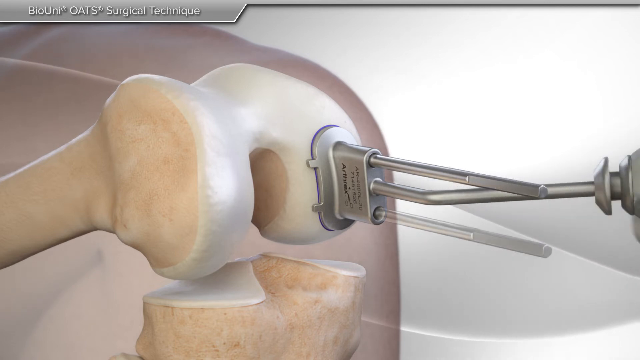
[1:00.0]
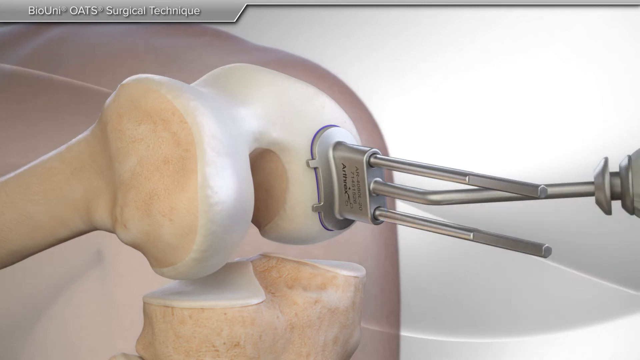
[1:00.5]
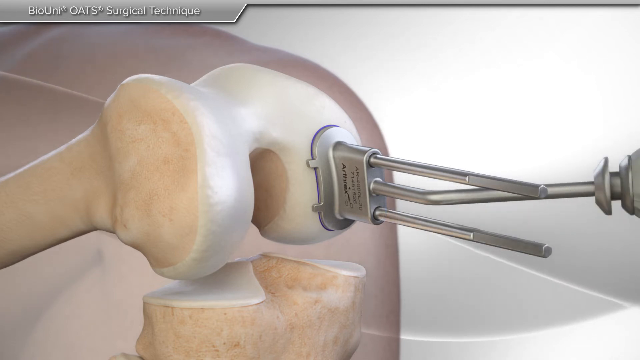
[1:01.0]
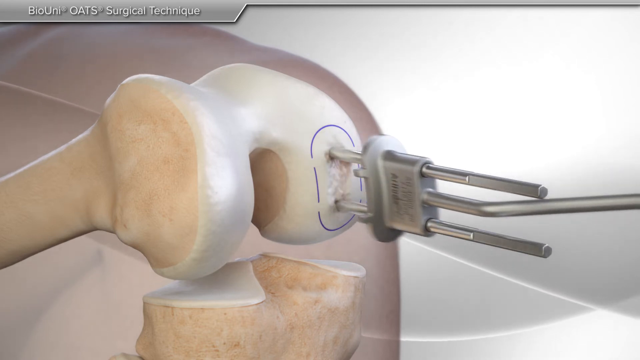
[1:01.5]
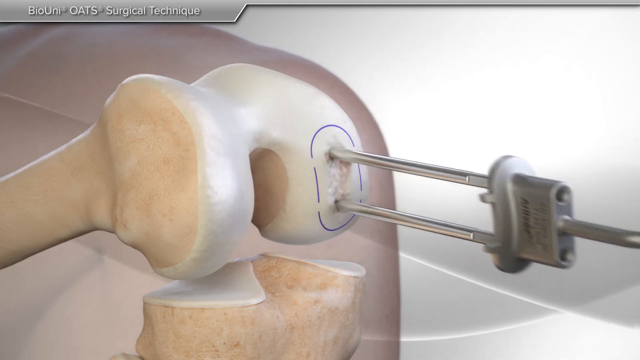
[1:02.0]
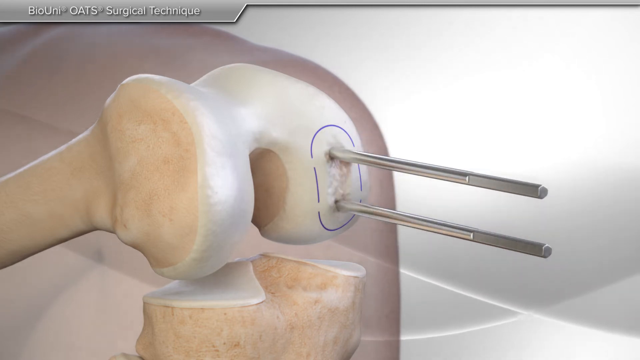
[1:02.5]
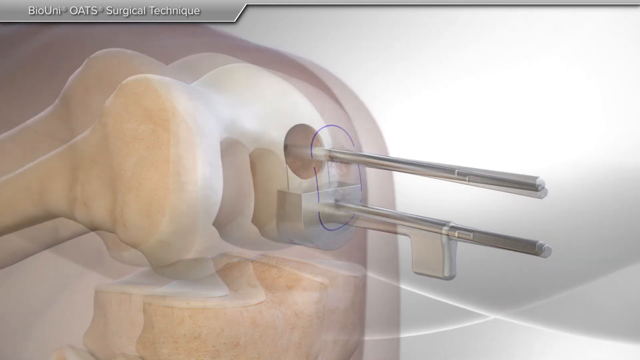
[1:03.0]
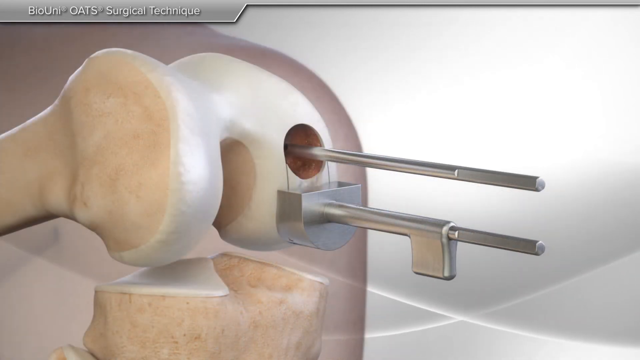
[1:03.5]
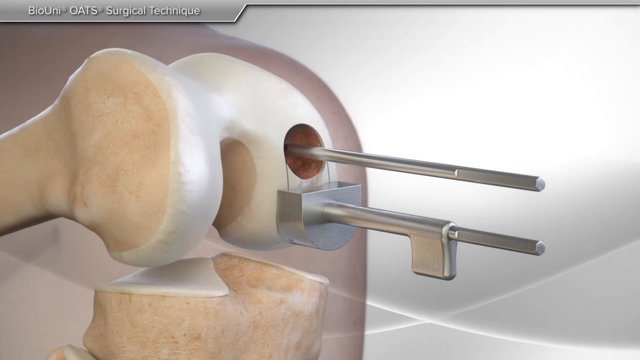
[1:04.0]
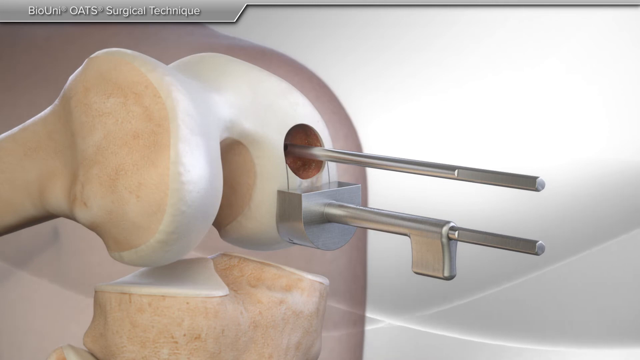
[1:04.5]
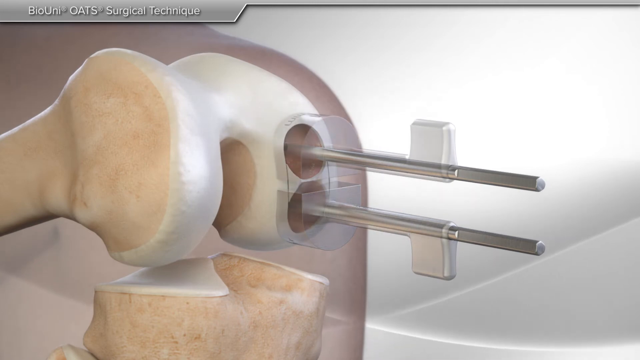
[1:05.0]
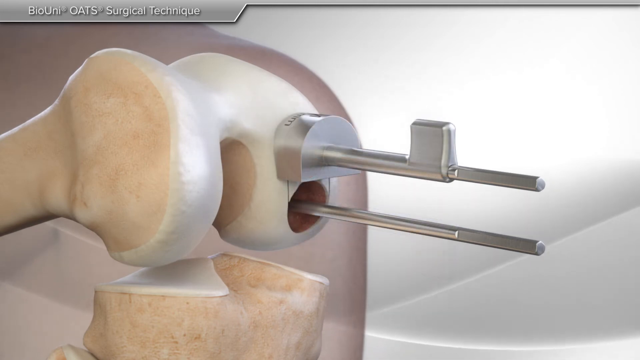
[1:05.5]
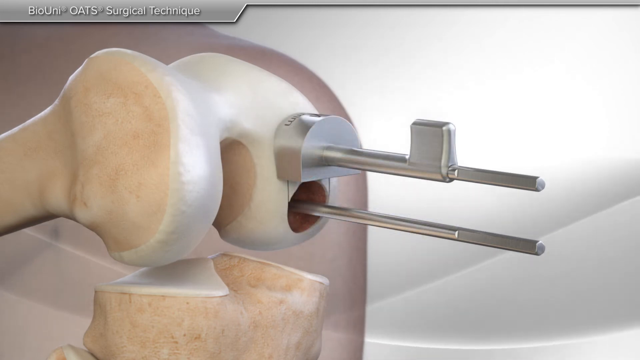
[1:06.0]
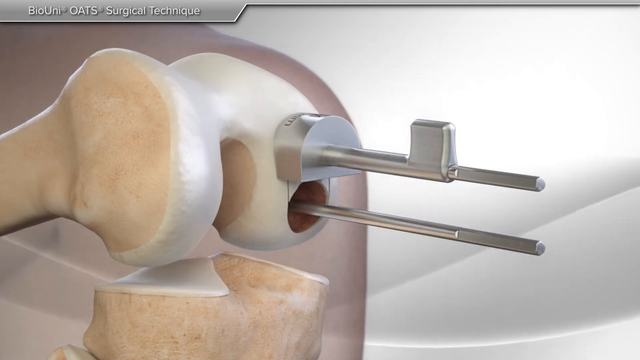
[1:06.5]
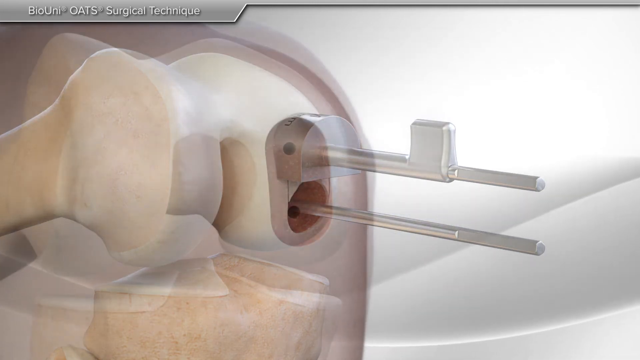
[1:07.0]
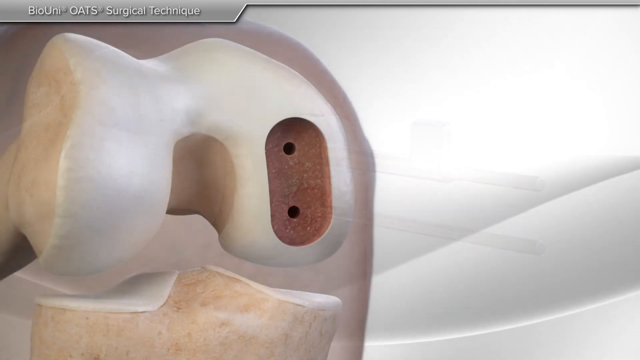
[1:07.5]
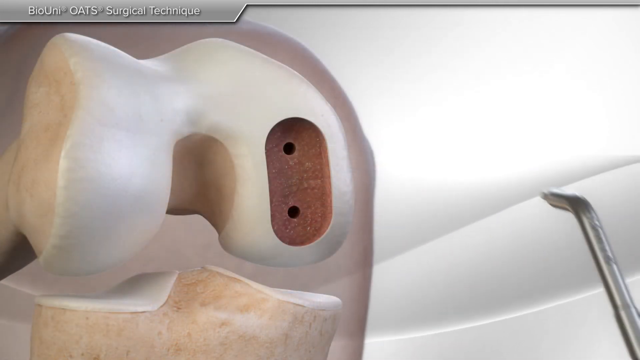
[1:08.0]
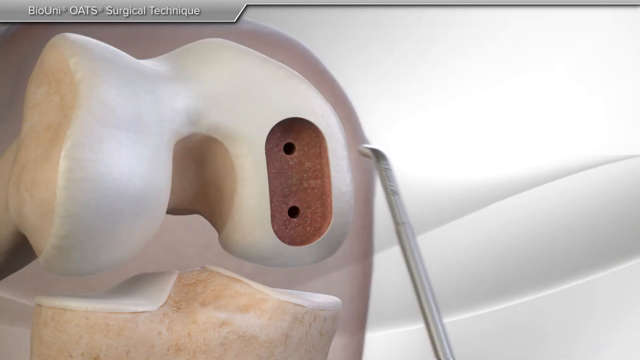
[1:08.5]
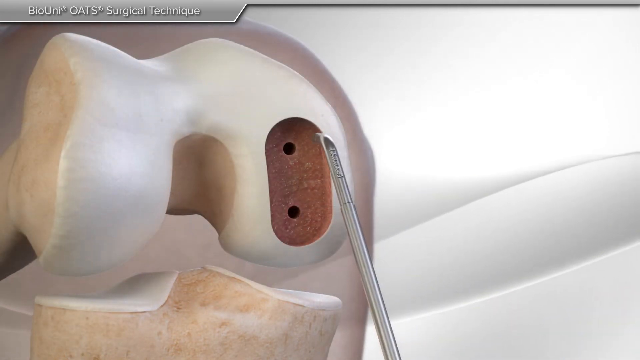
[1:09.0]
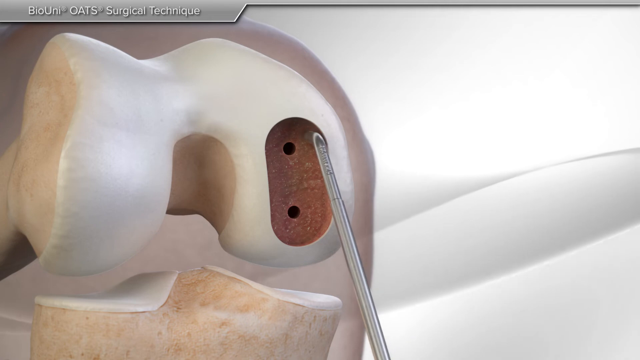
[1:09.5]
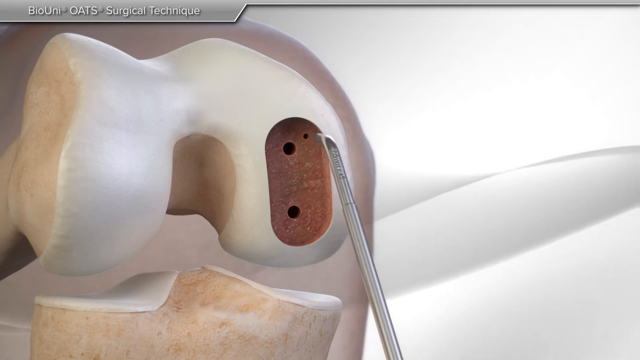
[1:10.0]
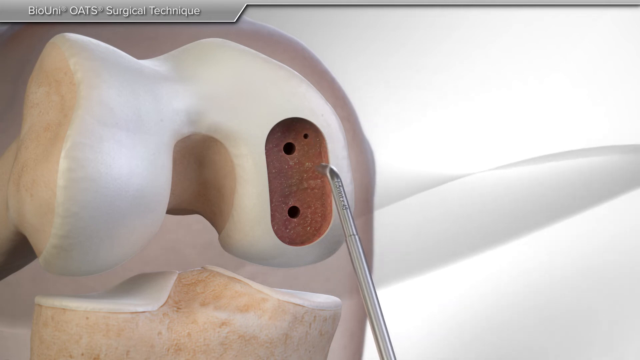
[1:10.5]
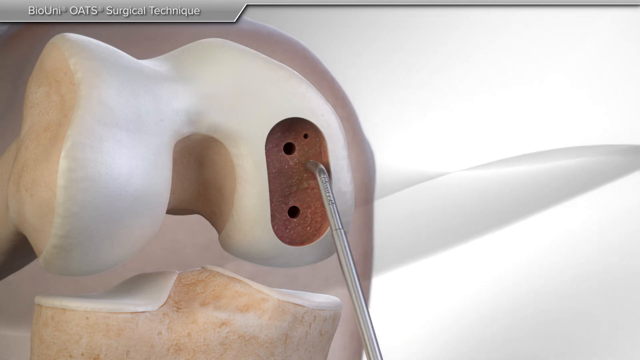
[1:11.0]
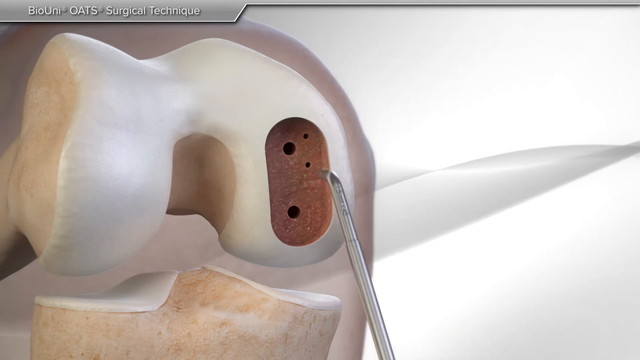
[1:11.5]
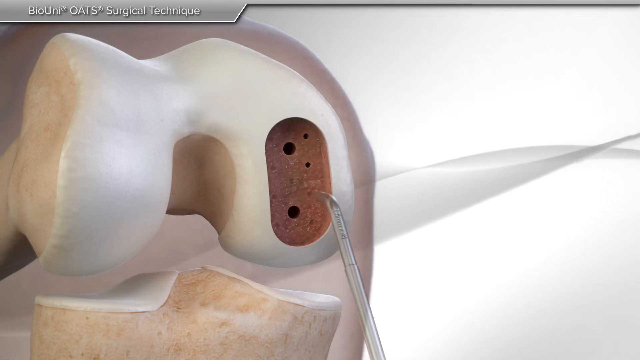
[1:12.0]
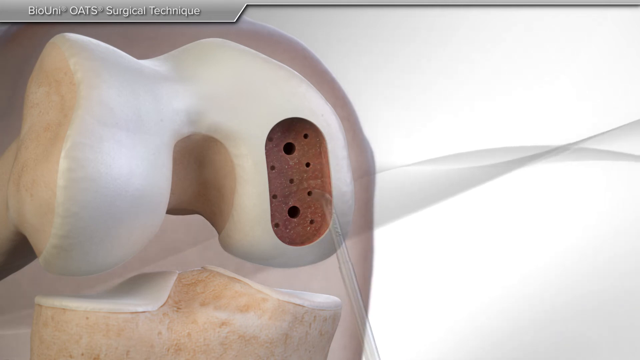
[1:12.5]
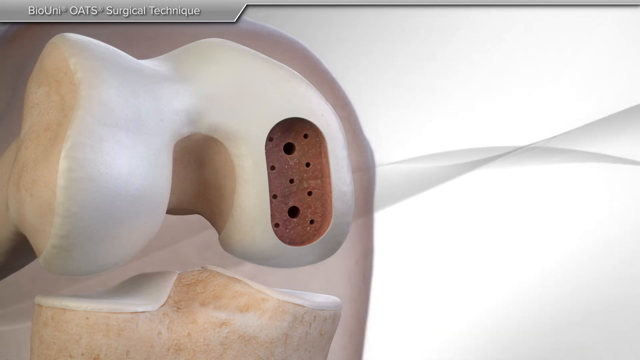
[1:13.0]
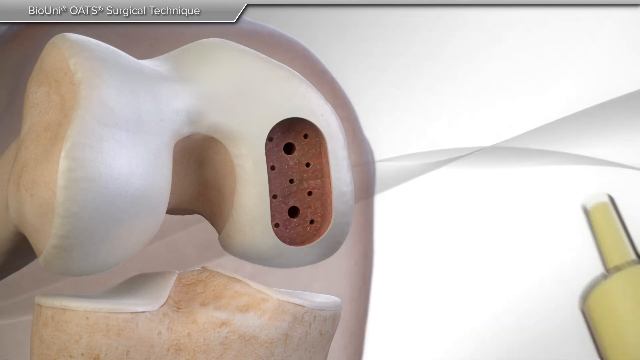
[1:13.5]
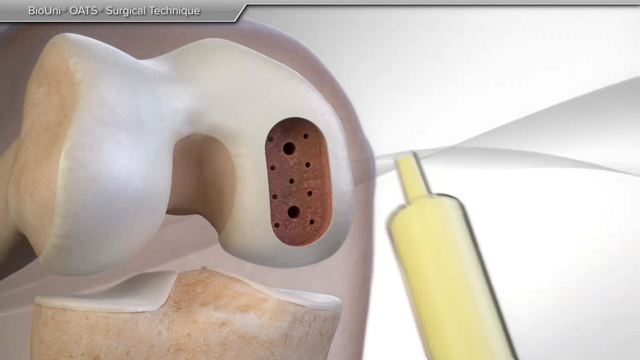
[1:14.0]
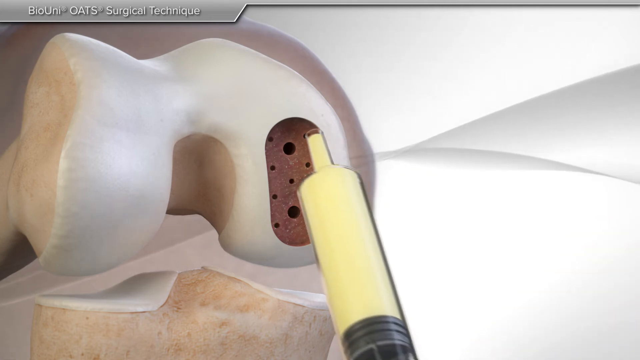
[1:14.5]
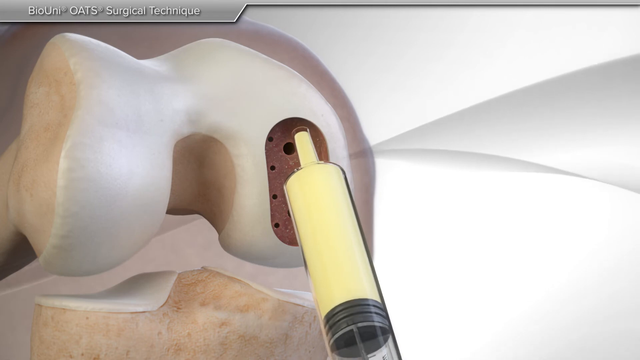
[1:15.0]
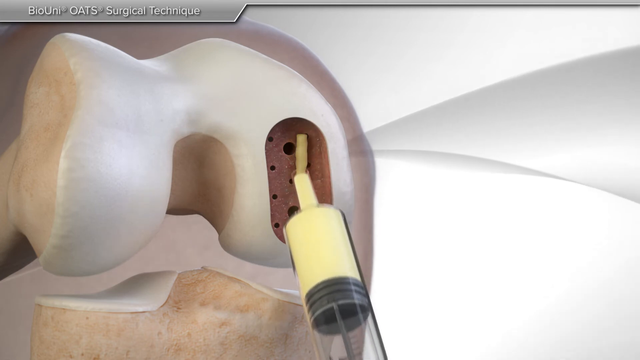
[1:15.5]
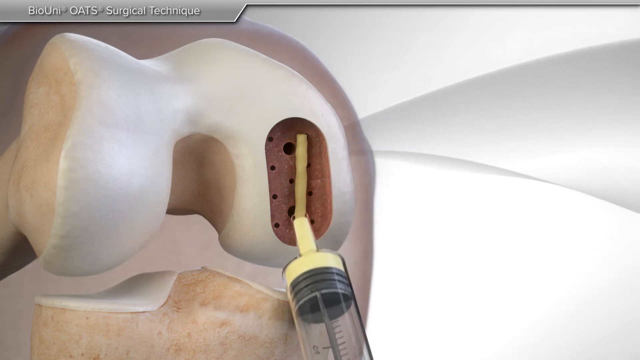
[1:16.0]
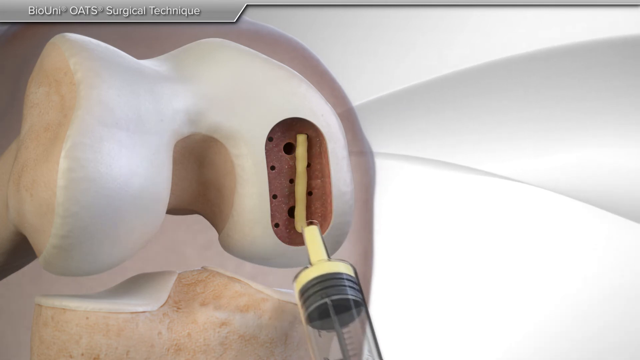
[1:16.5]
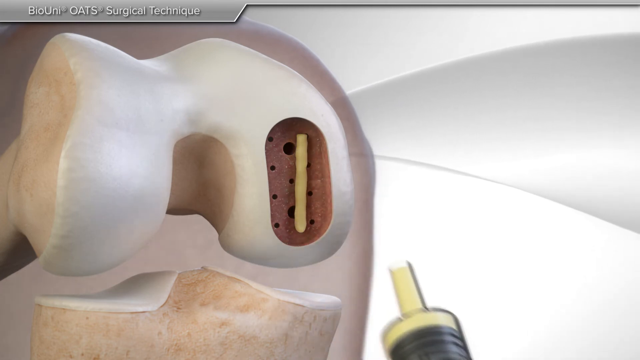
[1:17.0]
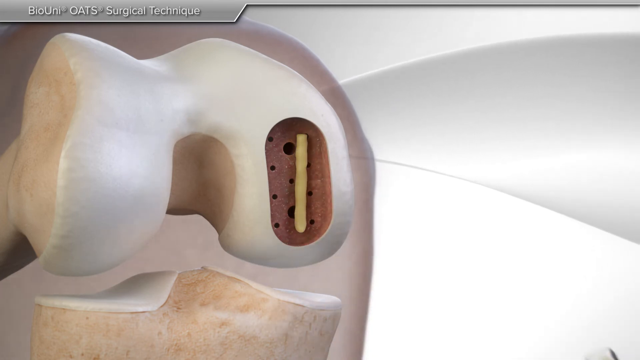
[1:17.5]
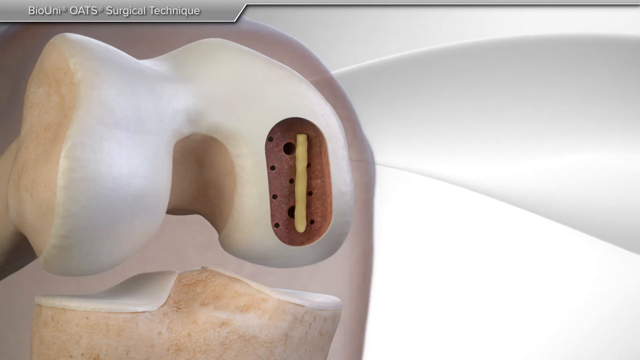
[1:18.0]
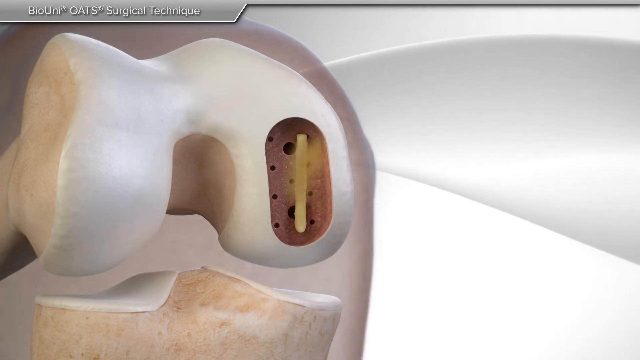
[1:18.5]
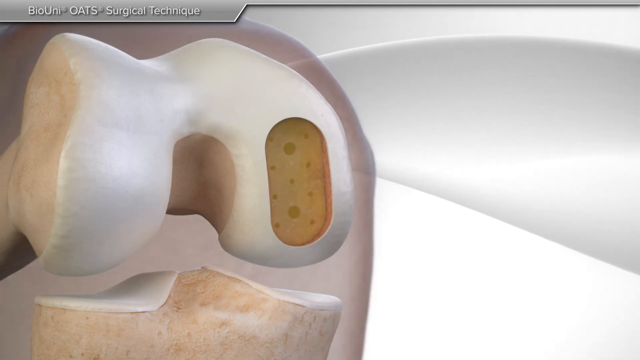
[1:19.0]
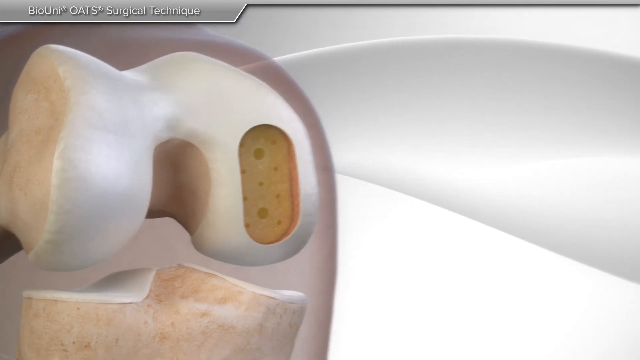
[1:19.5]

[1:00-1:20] The picture of the bent knee joint shows the silver kidney-shaped attachment on the damaged area, with rods inserted in both the top and bottom holes of the handle, leaving the rods screwed into the damaged area. Another picture of the damaged knee joint shows an area around the top rod removed in a circle, with a larger silver rod in a horseshoe shape at the base of the second screw or rod. Then the reverse is shown: a circular hole has been made around the second, bottom rod, with the horseshoe shape now at the top. Both rods are then removed, leaving an oval shape with two holes in the damaged portion. A pointed piece of equipment makes little holes around the outside of the two drilled holes. A large syringe applies a yellow liquid in a line from the top to the bottom of the hole, and the liquid is then spread.